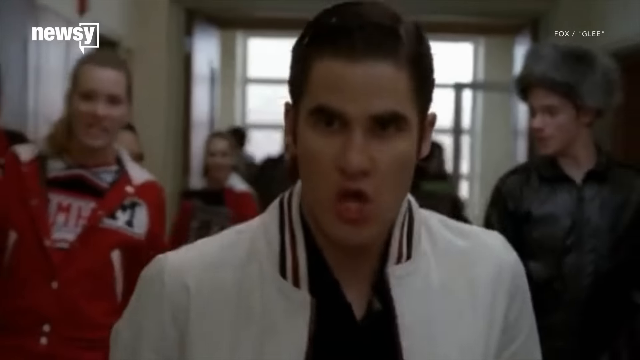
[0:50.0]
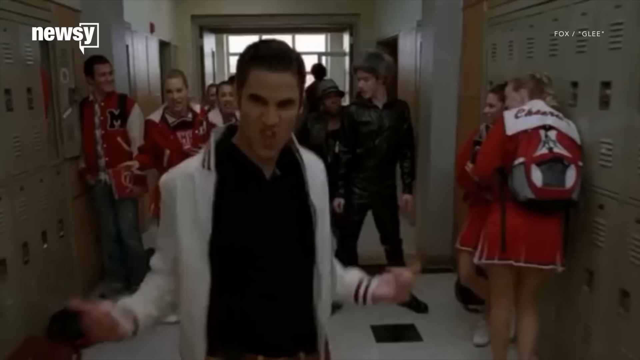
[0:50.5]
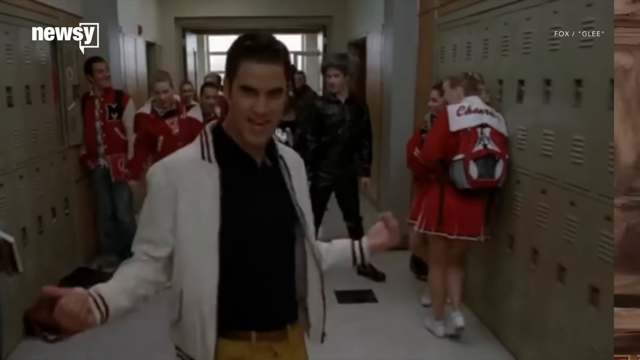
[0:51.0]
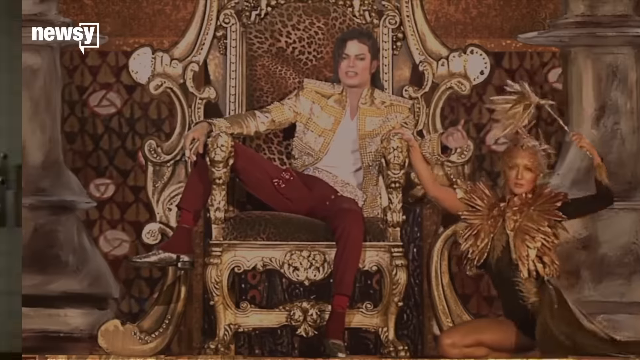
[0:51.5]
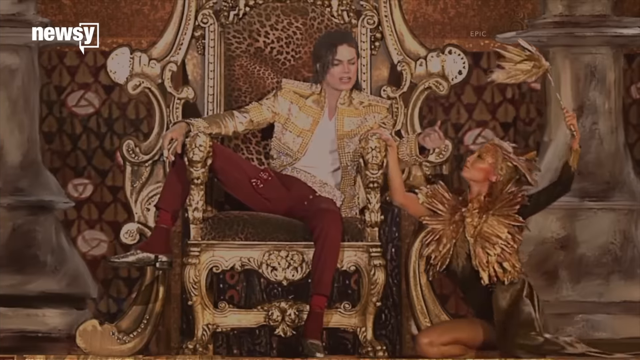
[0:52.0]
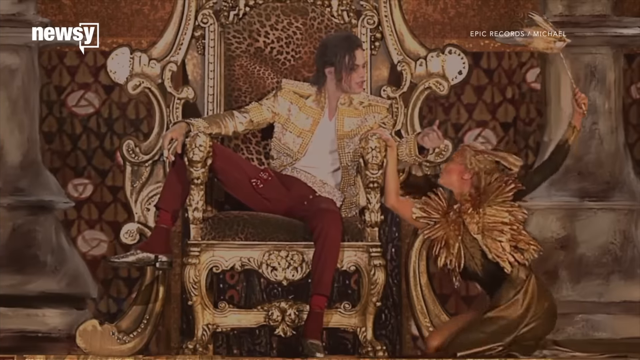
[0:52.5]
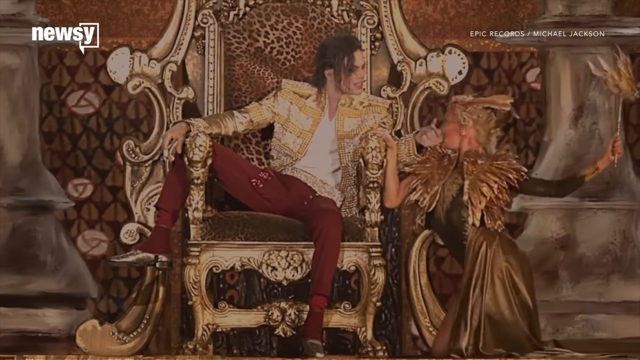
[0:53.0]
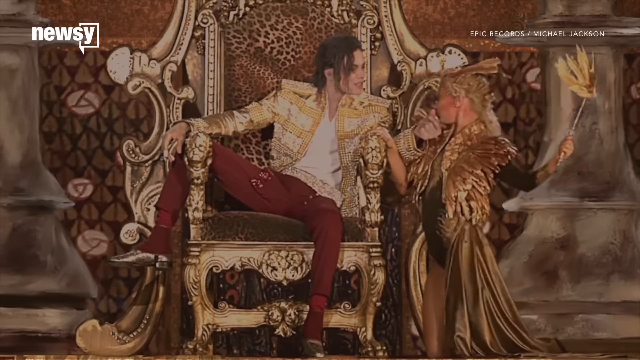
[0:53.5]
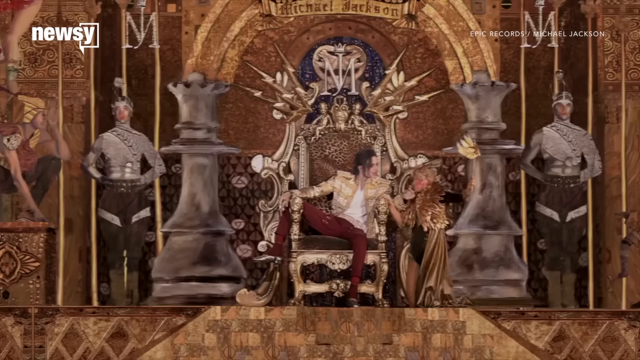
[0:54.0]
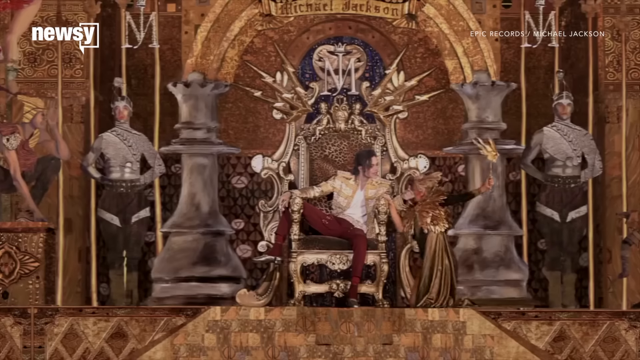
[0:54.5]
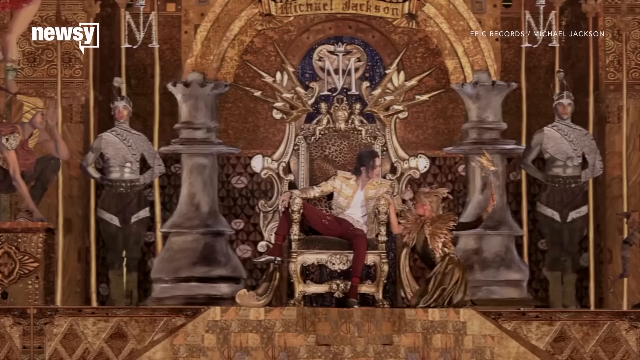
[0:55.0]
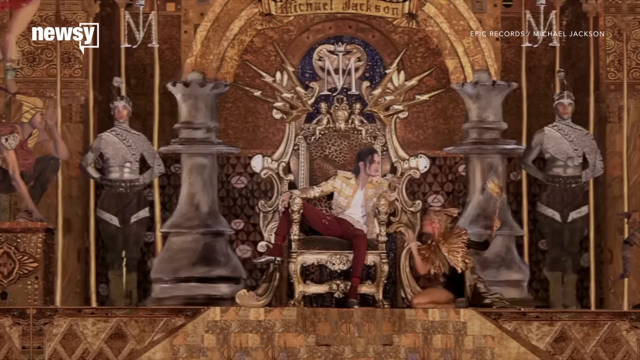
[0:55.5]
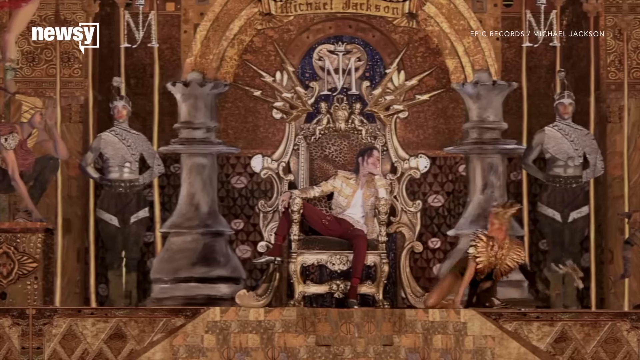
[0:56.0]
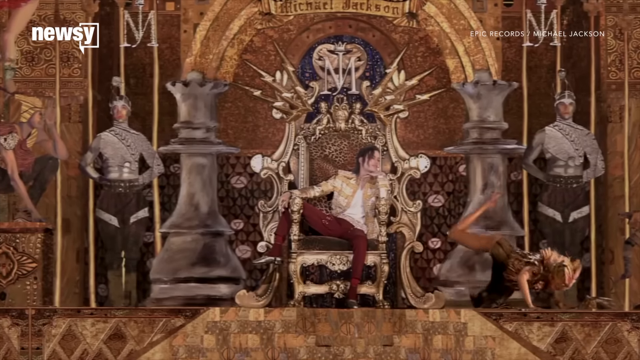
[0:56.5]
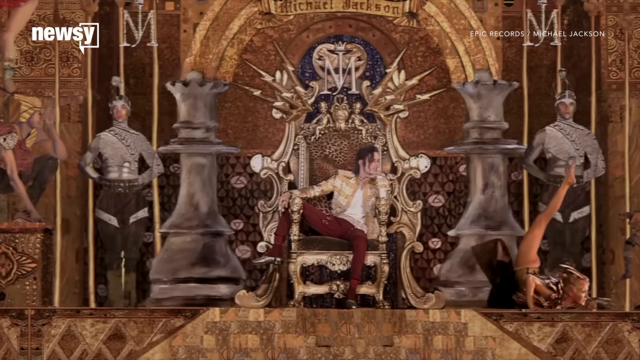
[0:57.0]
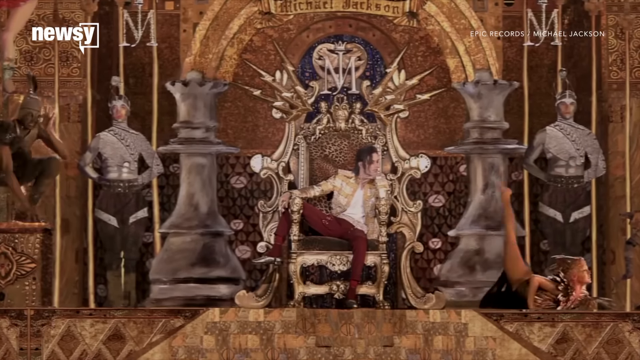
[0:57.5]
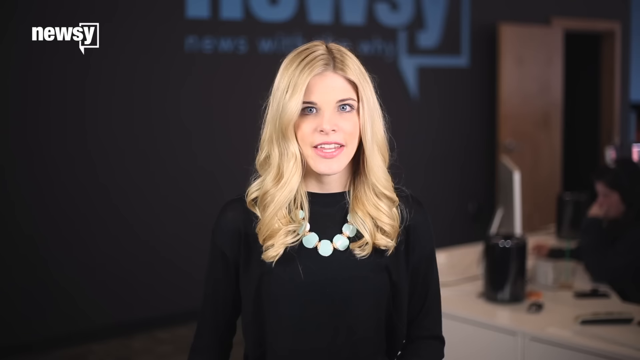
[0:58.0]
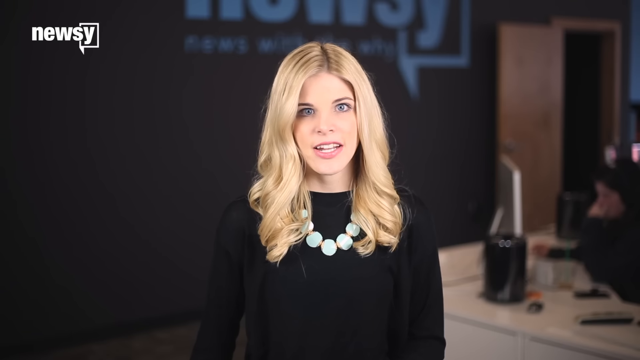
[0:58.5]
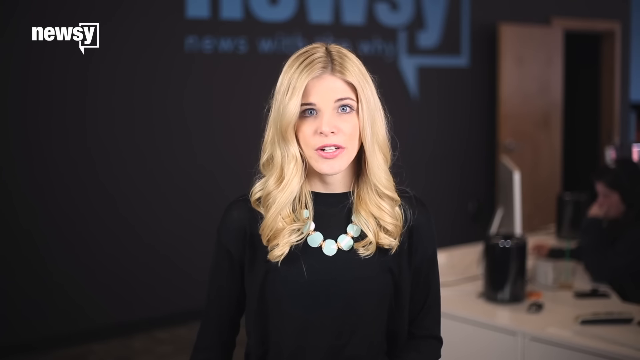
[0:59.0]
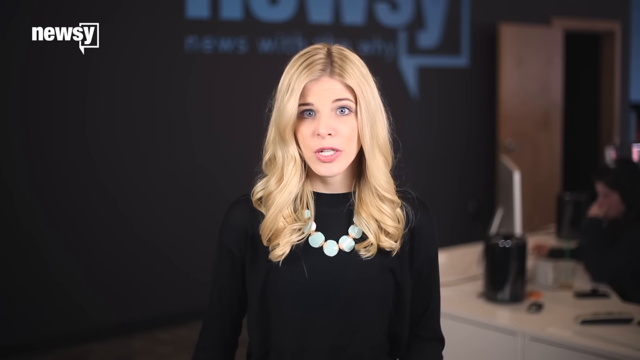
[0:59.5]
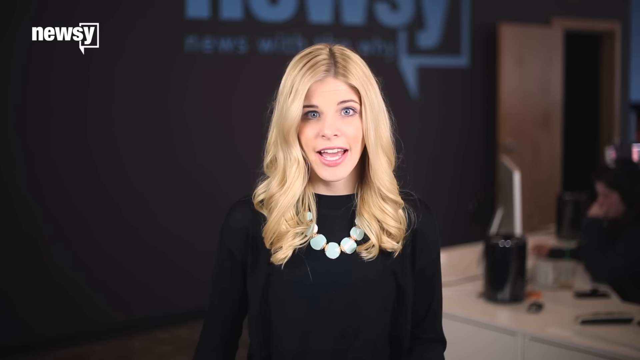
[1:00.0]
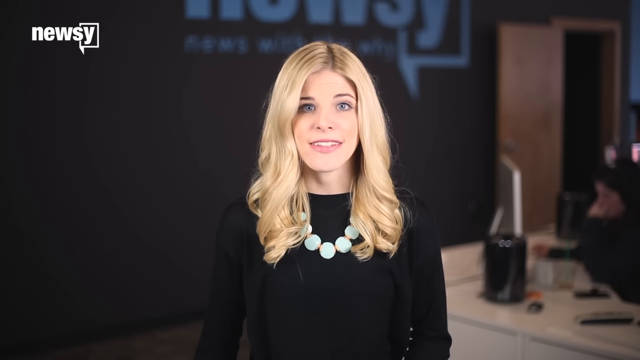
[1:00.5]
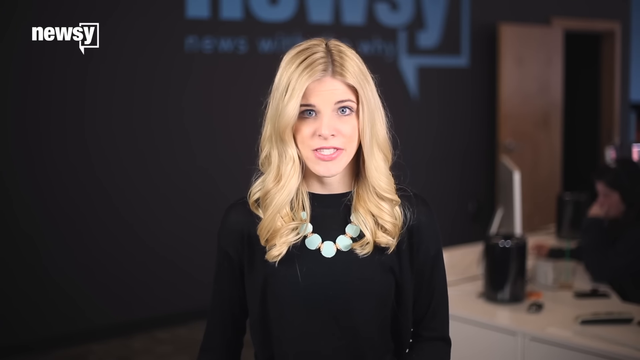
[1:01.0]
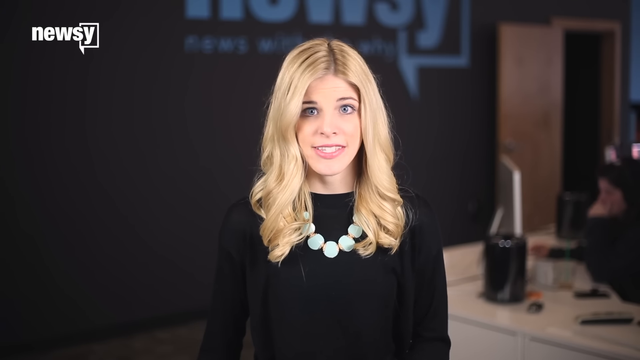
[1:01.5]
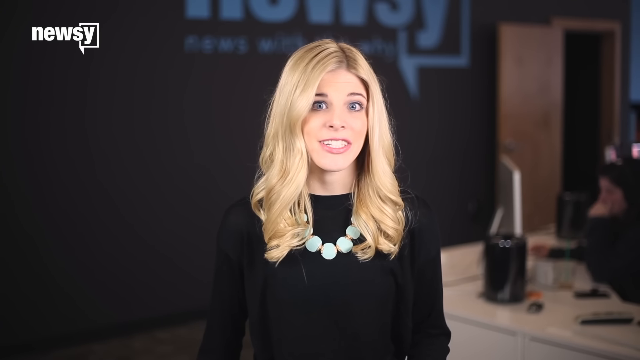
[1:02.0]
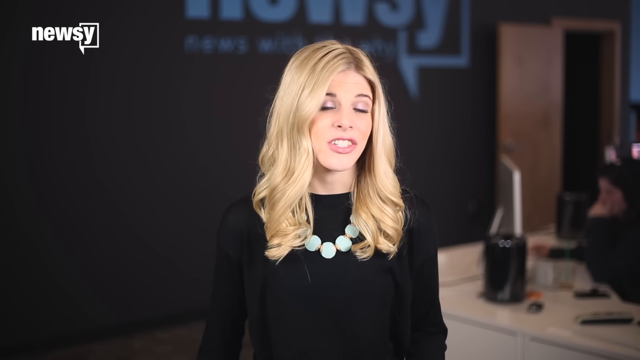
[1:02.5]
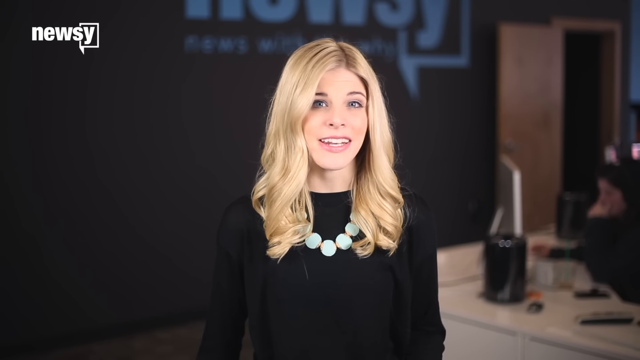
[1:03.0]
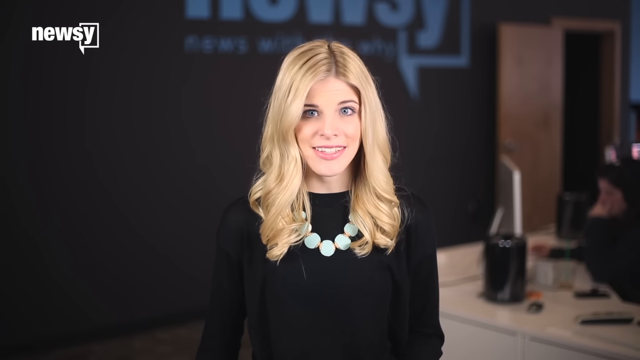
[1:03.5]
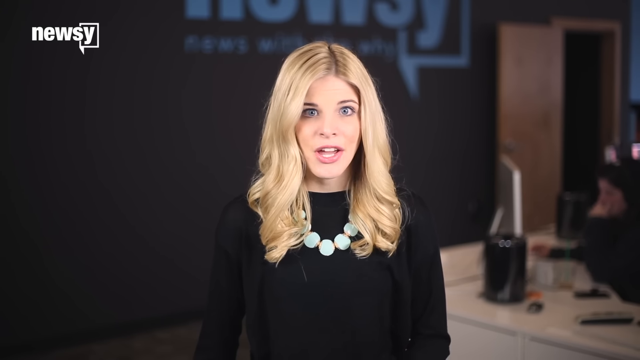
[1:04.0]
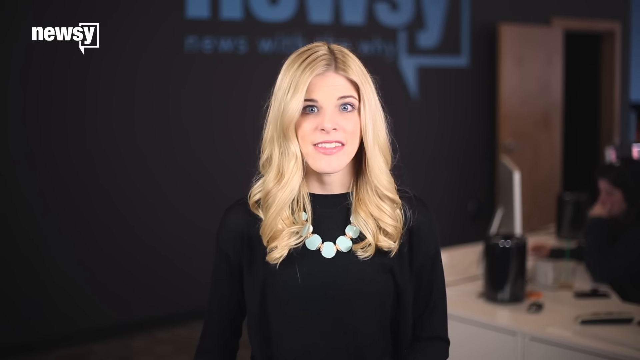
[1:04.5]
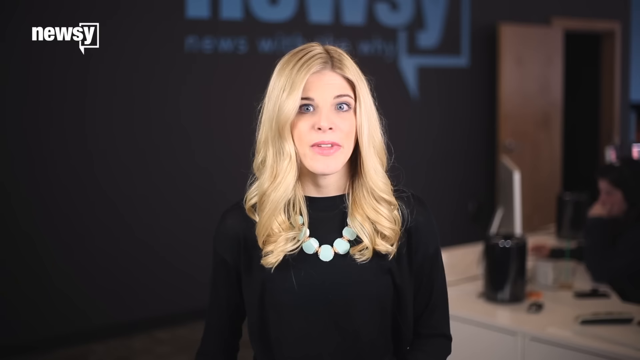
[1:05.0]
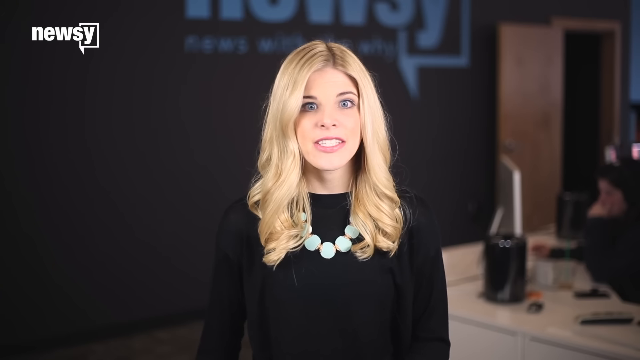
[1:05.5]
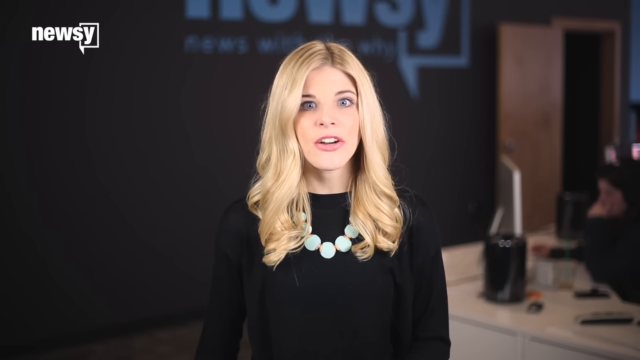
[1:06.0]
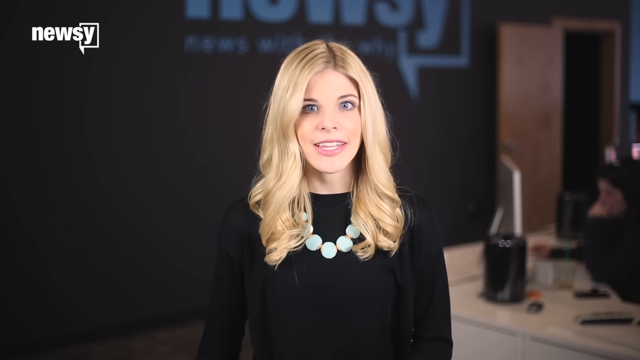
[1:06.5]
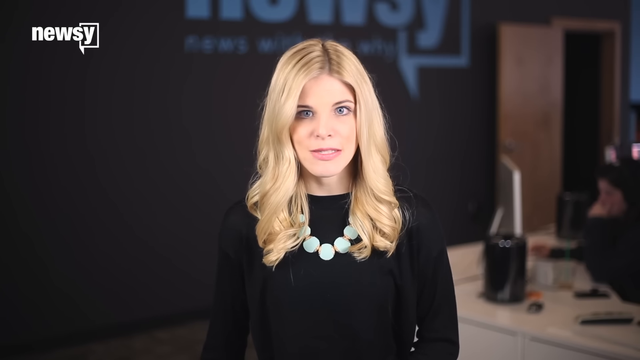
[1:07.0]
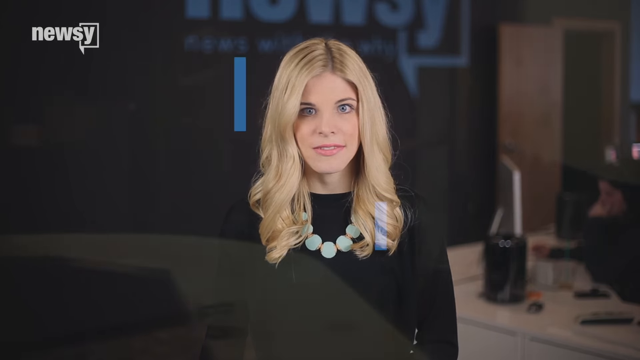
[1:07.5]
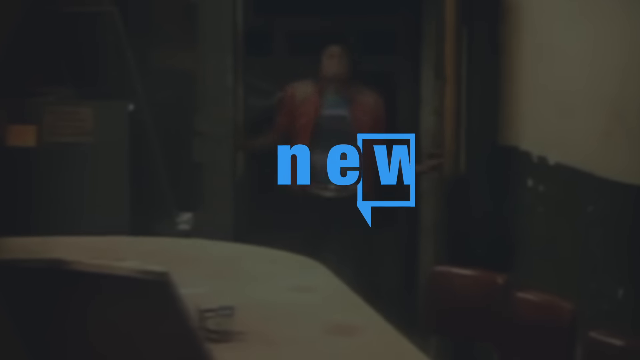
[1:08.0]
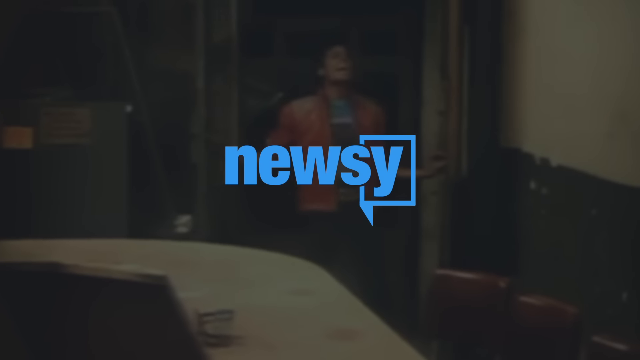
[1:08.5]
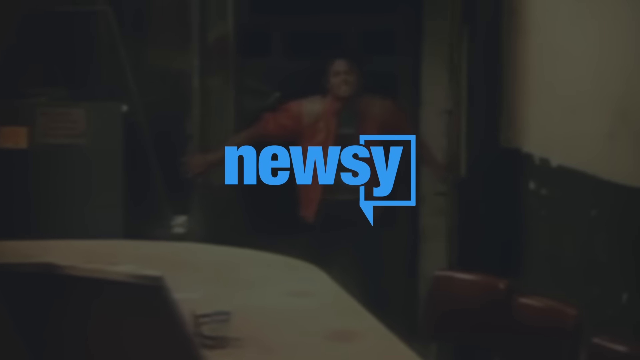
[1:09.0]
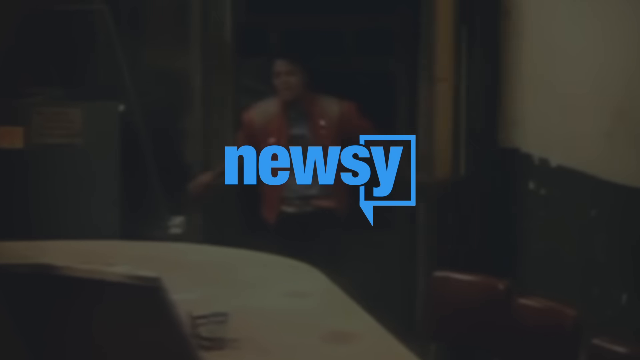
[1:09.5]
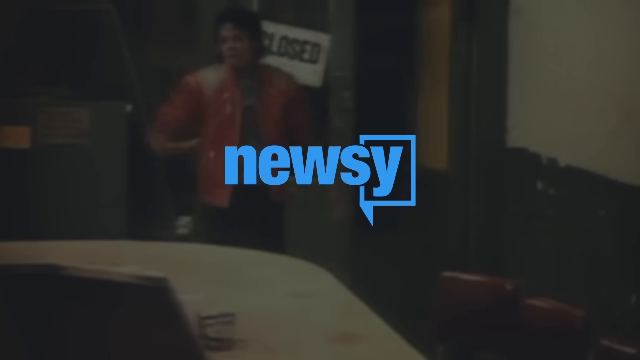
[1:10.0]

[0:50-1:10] What looks like a music video is a scene from the Fox series Glee, which is written in the top right of the screen. A man who looks like an Elvis Presley impersonator wears a white and black jacket over a black T-shirt and dances in a school hallway, with other people behind him, one in a red tracksuit and another in a Russian fur hat. The video transitions to Michael Jackson on a throne-like chair with one leg hanging over an armrest. The throne is golden with what looks like a leopard print. He wears what seems like gold-colored regalia with a white T-shirt, red pants and gold shoes. A woman in a costume at his side holds something golden that looks like a leaf, swinging it as she dances. Two guards are positioned by the throne with their hands behind their backs. The video then transitions to the blonde newscaster in a necklace and black dress, talking, and the Newsy logo appears at the end of the screen.